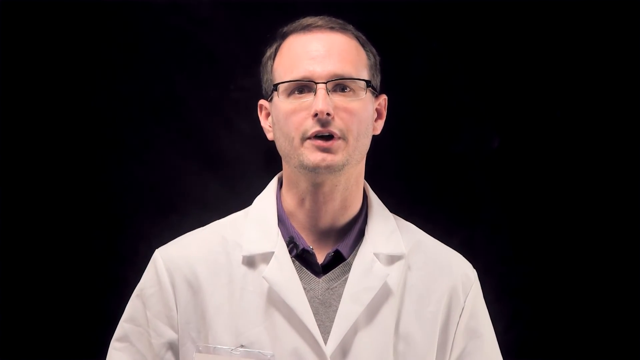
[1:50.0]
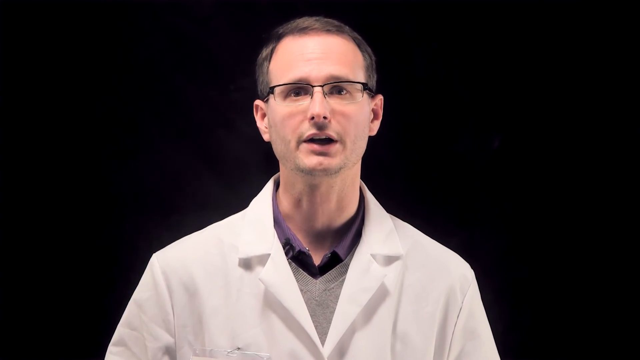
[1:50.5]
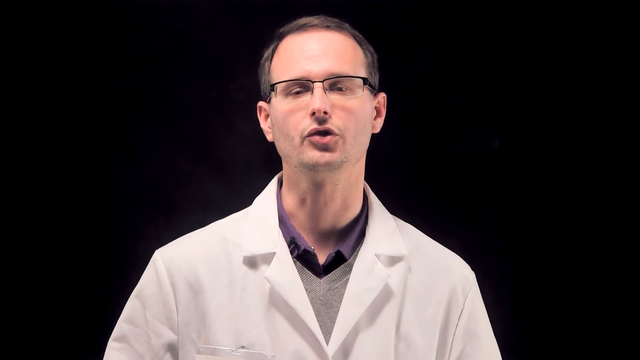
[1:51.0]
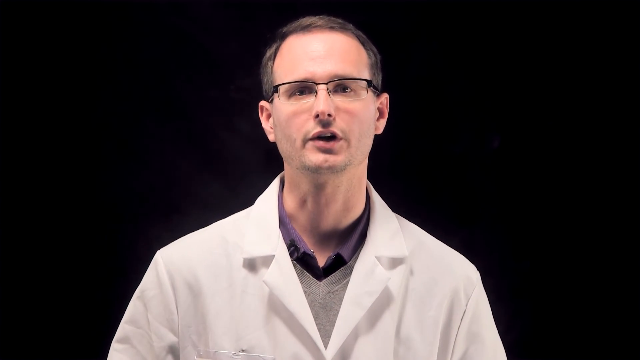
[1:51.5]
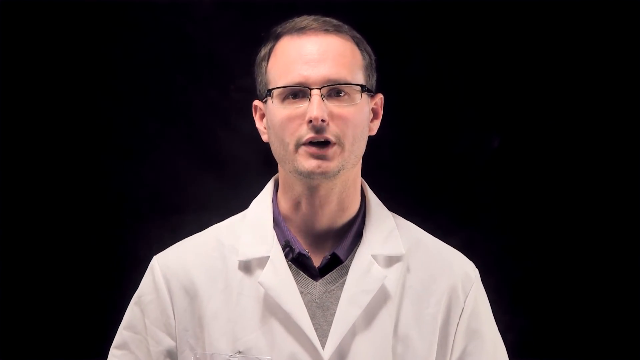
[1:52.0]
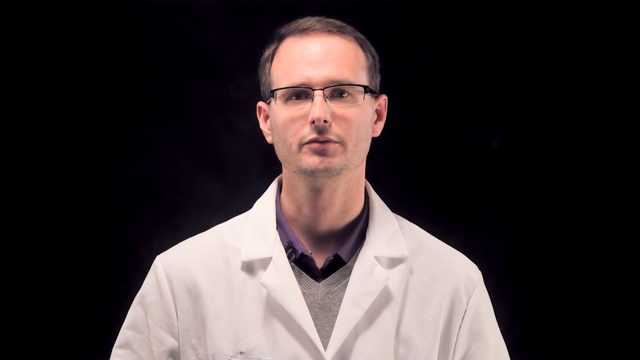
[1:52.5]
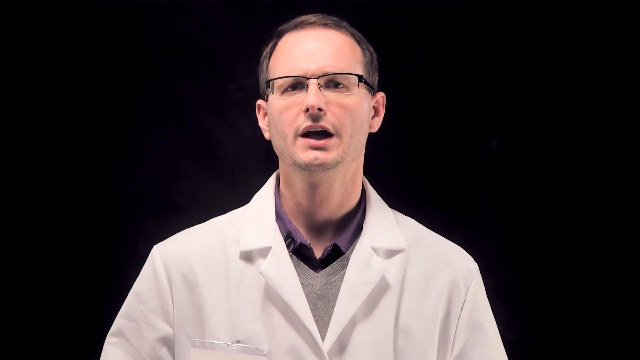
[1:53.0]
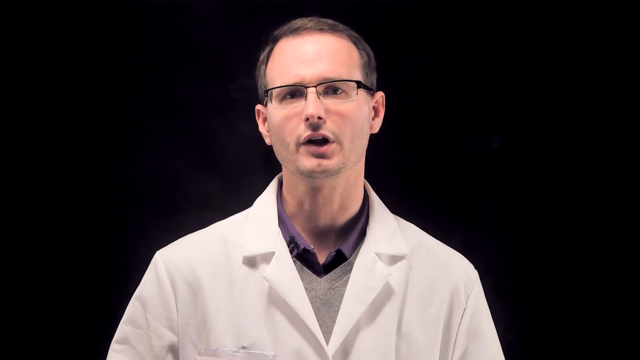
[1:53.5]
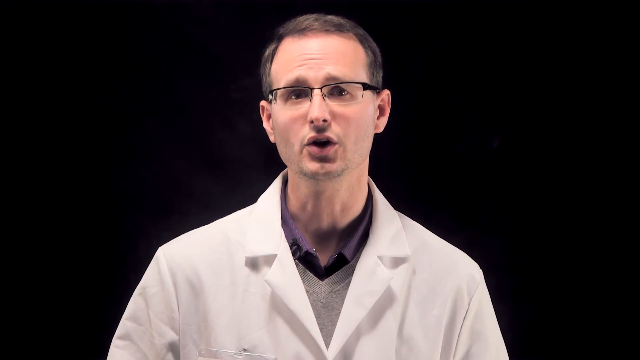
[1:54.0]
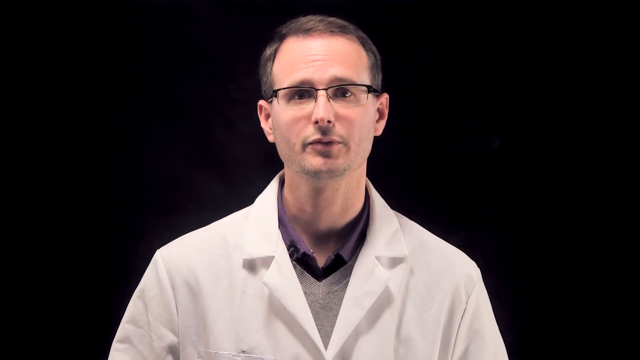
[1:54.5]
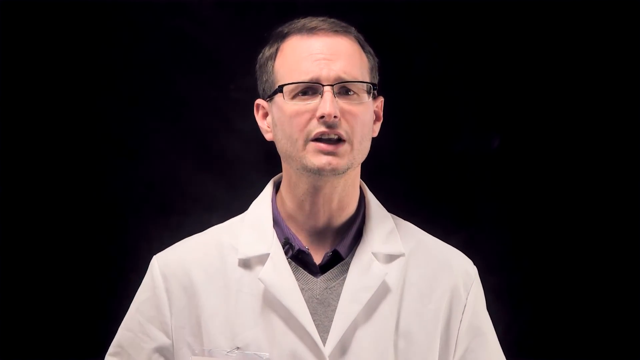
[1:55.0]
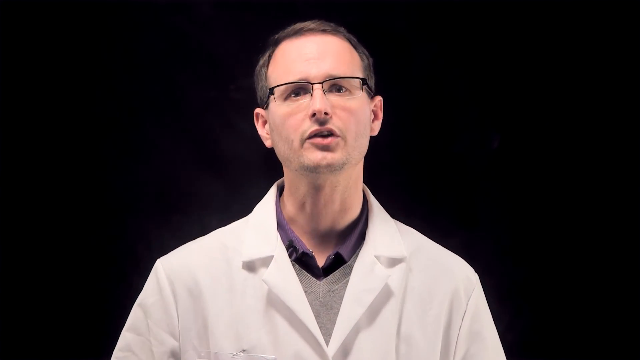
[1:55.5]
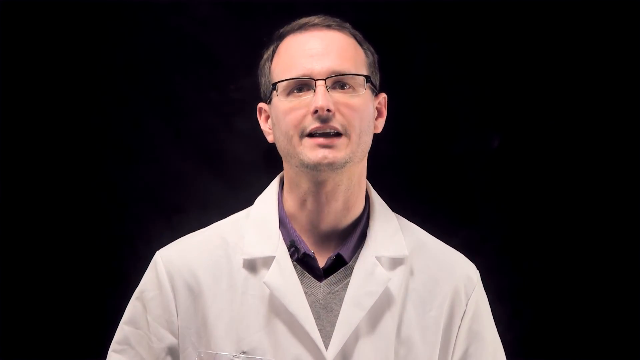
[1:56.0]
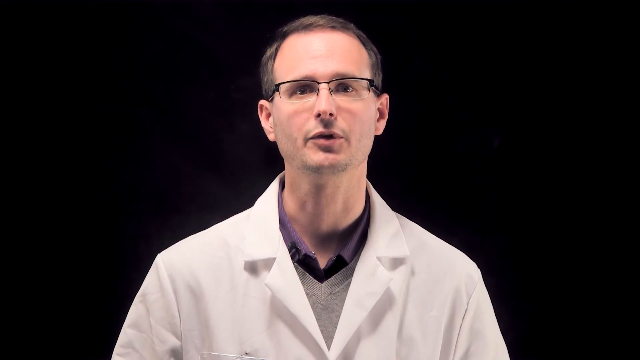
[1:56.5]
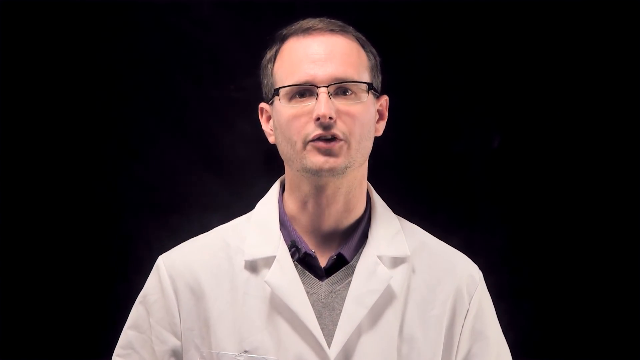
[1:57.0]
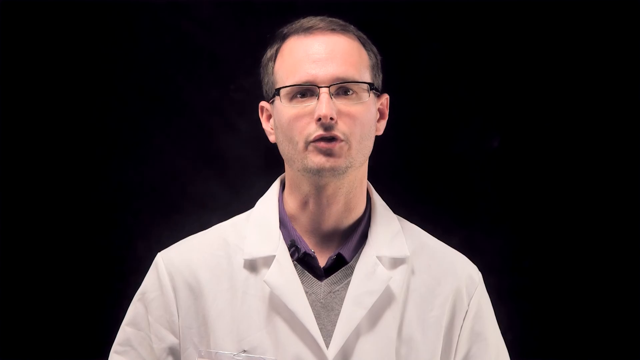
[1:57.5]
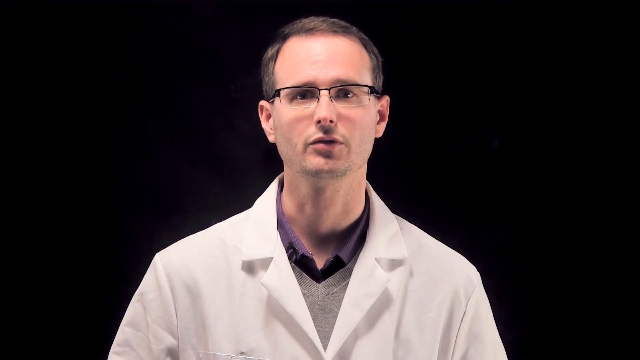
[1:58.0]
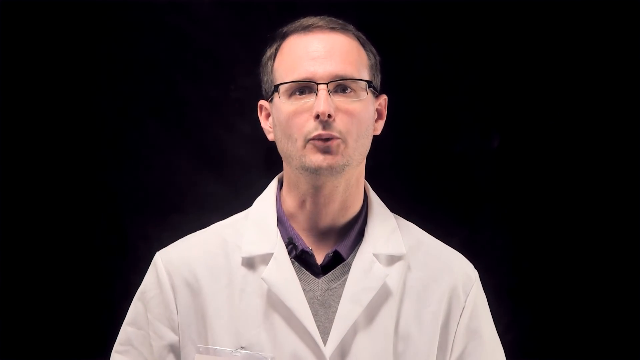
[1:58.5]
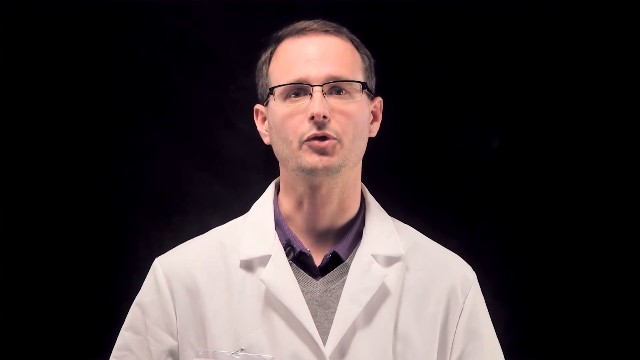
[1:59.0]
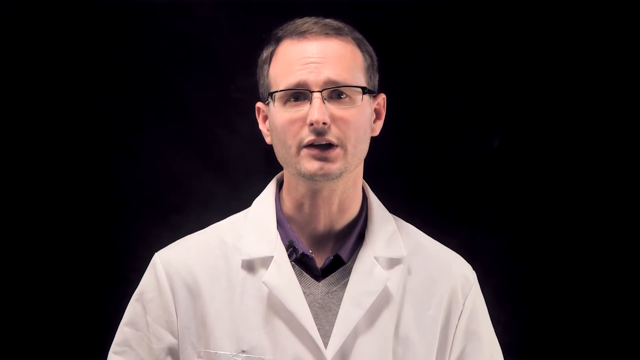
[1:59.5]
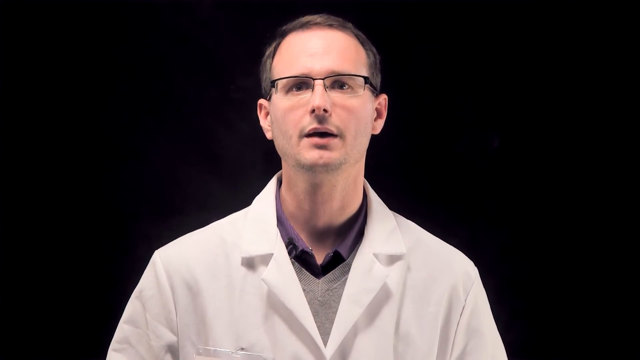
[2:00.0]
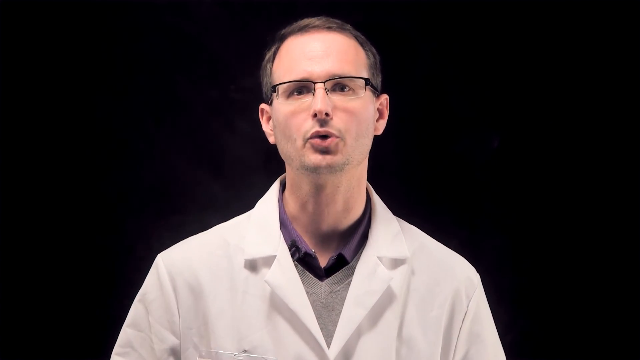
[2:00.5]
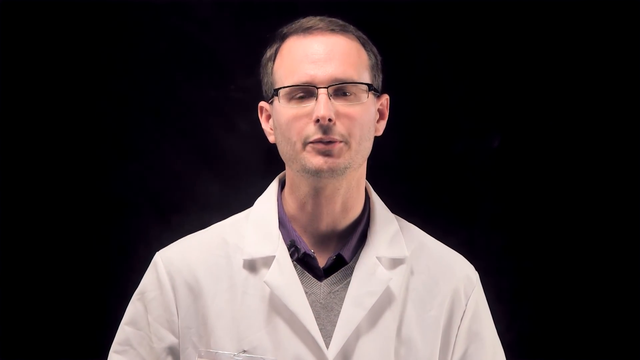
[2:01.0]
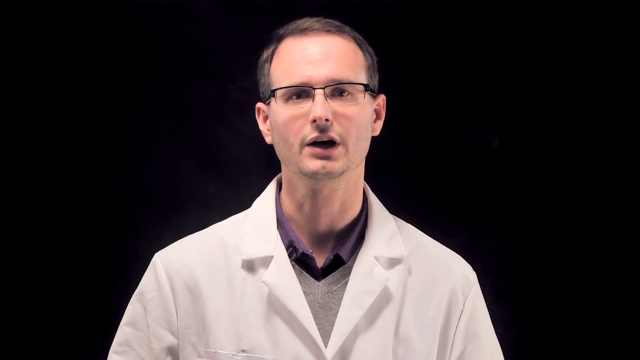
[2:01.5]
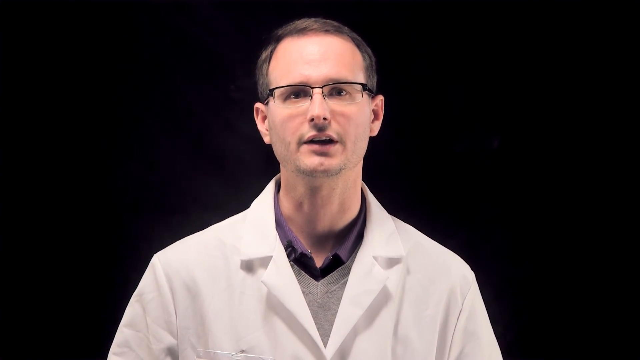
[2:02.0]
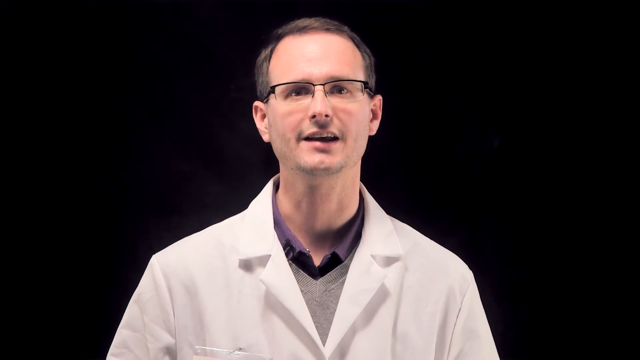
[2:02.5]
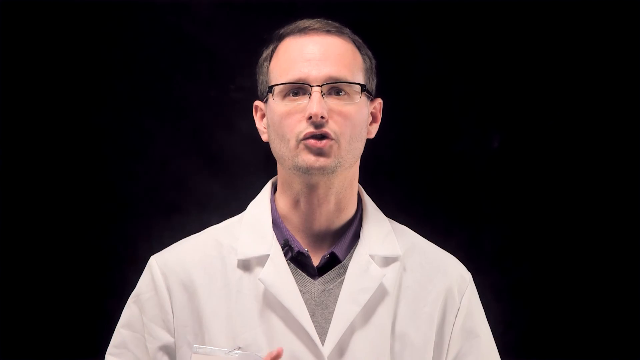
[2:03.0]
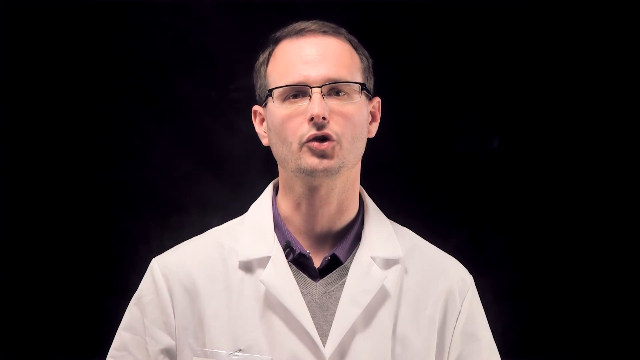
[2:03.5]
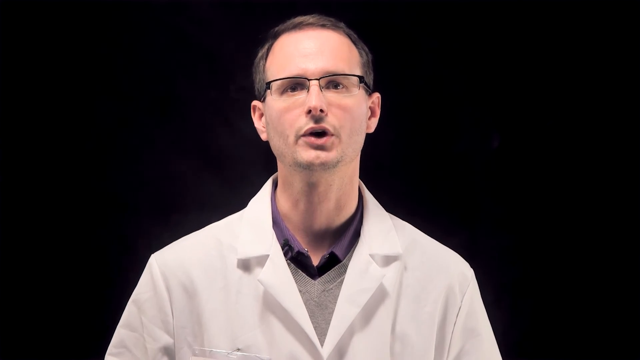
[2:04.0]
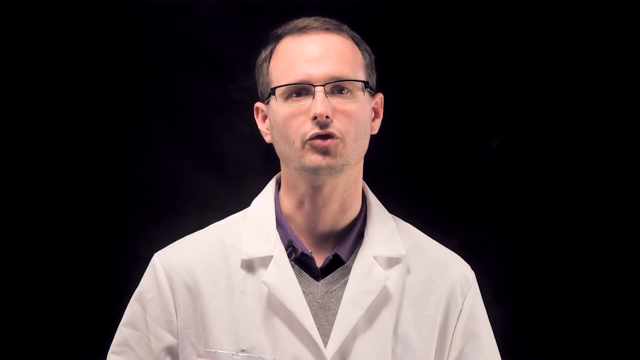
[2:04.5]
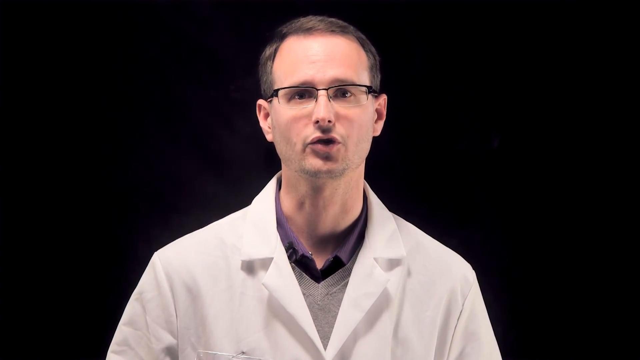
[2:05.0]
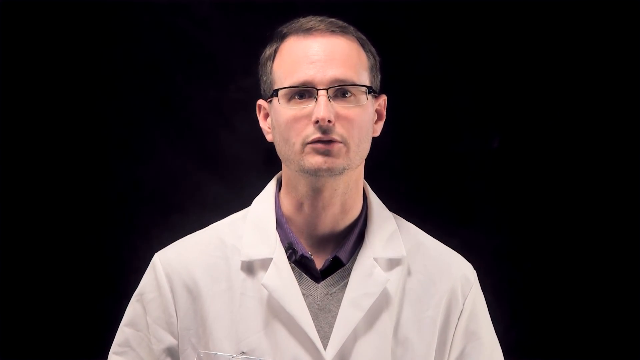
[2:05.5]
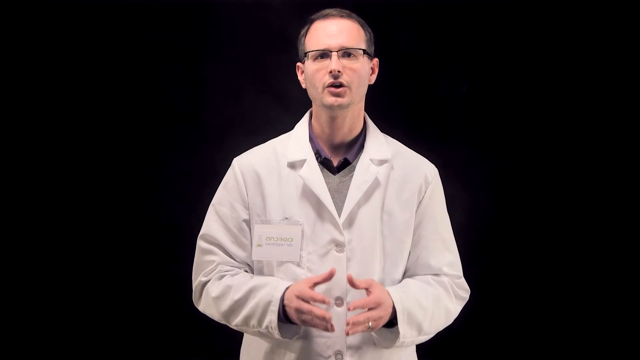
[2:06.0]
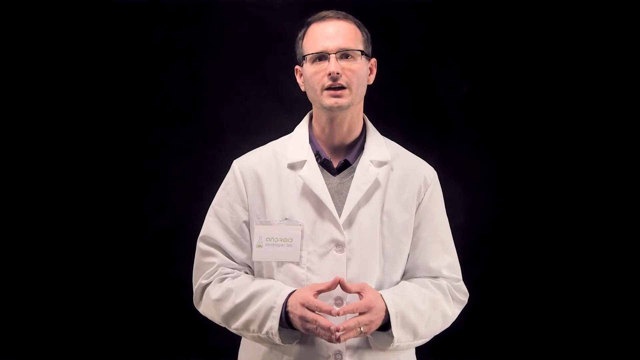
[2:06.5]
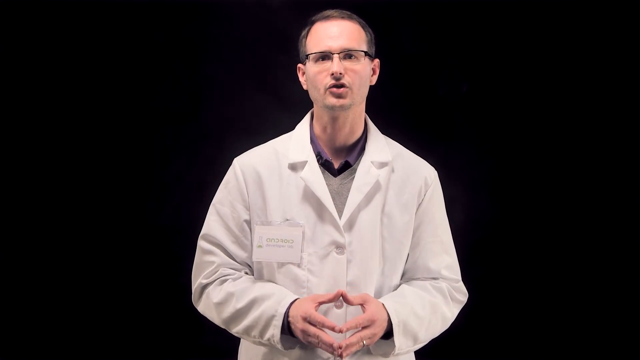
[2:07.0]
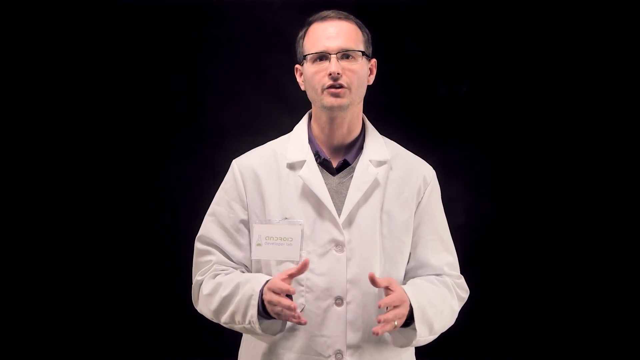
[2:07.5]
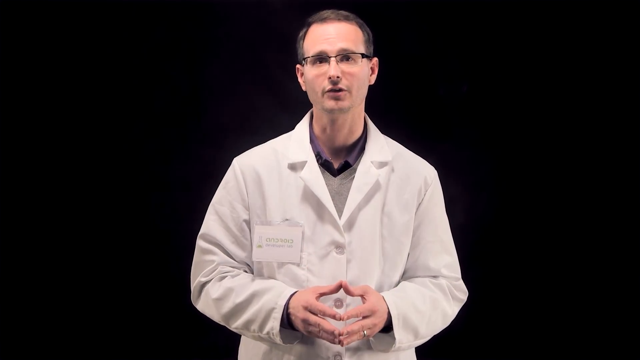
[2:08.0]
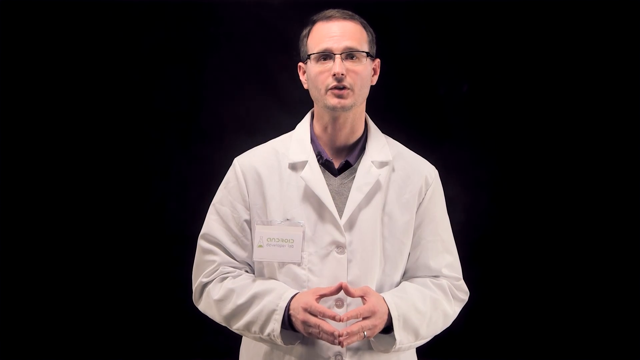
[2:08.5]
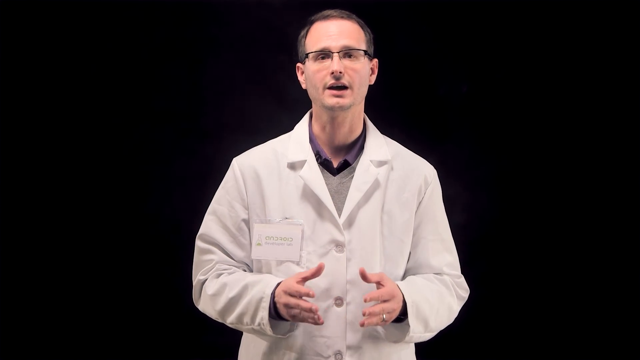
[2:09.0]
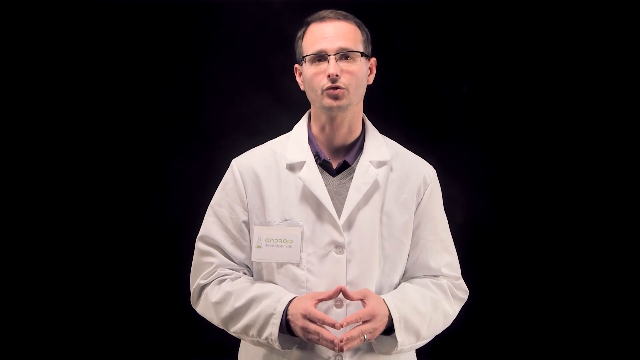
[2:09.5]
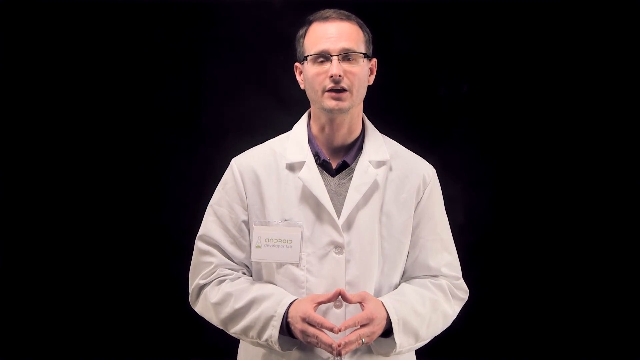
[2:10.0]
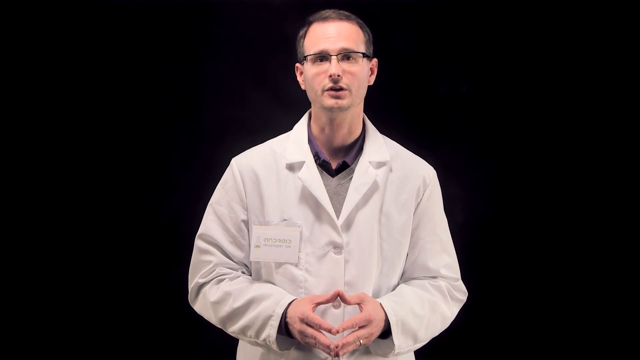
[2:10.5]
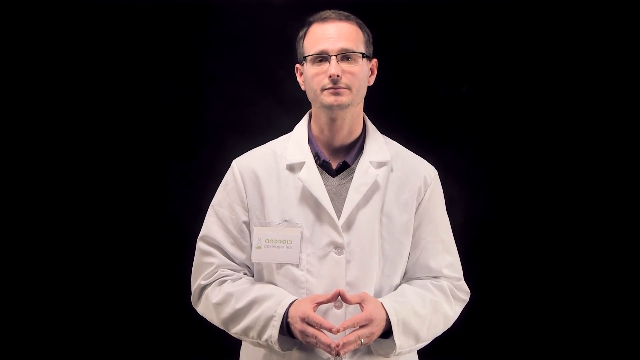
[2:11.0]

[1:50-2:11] The man is center screen, wearing a white coat with a white collar turned over that looks a little big for him, an open-necked purple shirt, and a blue V-neck pullover below that. He wears spectacles that are rimless at the bottom, with a dark rim and arms. He looks directly at the camera, speaking very calmly and not using his hands in any way. The background behind him is entirely black. The view then moves to a fuller shot of him, showing a white ID access badge on his right chest. His coat is buttoned just below the lapels, and further down a button is visible between his thumbs; his arms are bent at the elbow and his hands are joined kind of in a steeple, thumbs touching and pointing slightly upwards, with all the fingertips appearing to touch as well. He moves his hands apart, revealing a ring on the ring finger of his left hand, then brings them together again in the same position with the upturned thumbs and fingertips touching. He moves them apart and together again once more. The video ends with his fingers joined fingertip to fingertip.